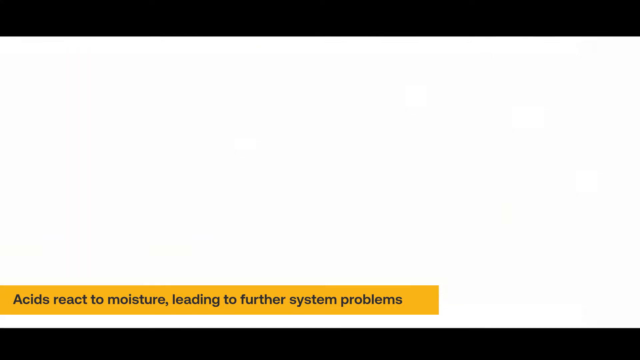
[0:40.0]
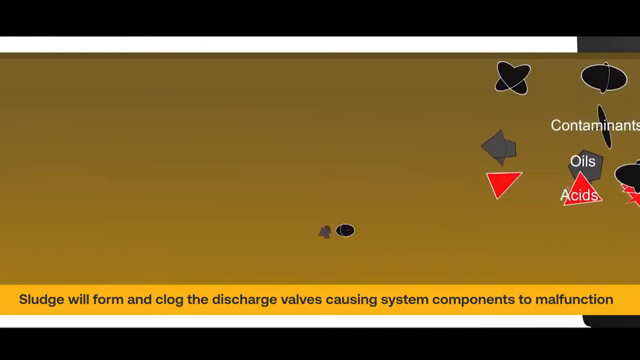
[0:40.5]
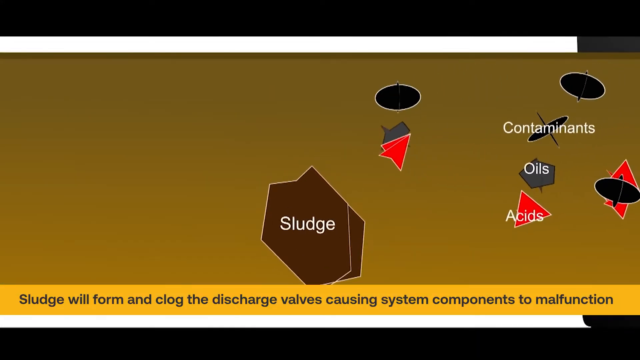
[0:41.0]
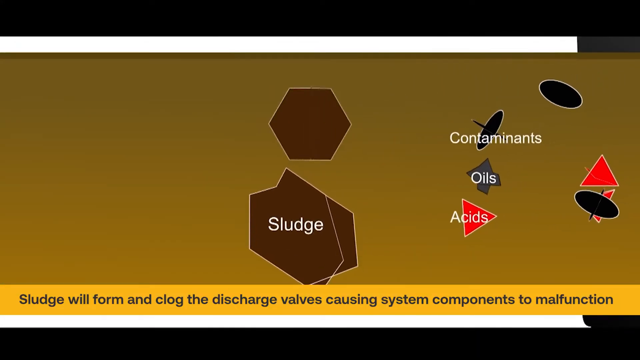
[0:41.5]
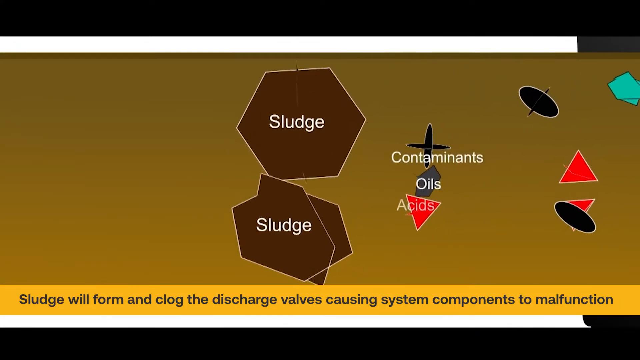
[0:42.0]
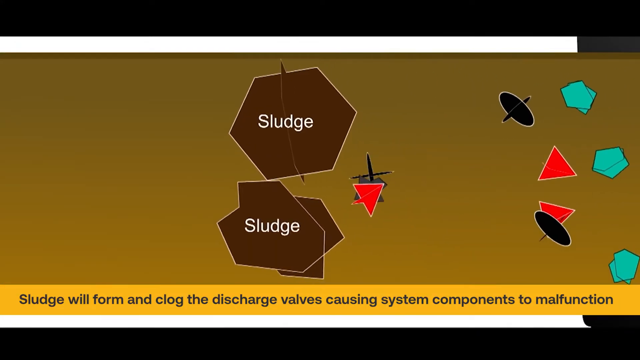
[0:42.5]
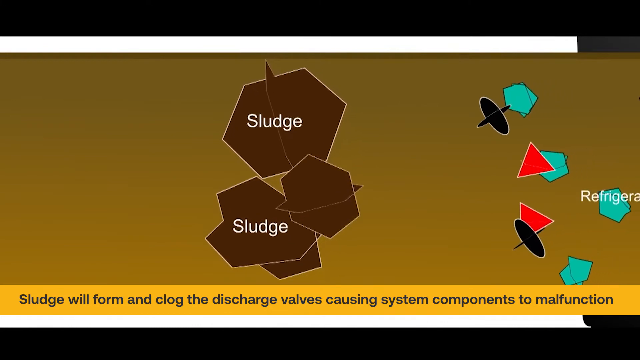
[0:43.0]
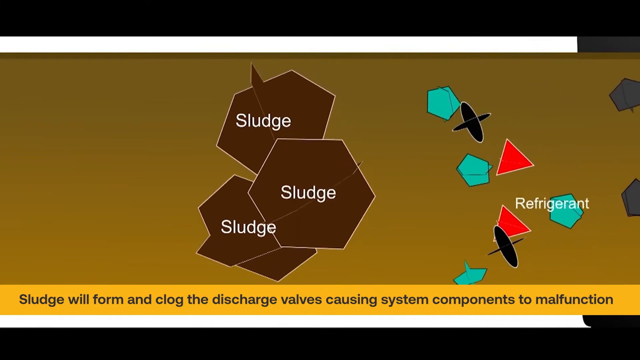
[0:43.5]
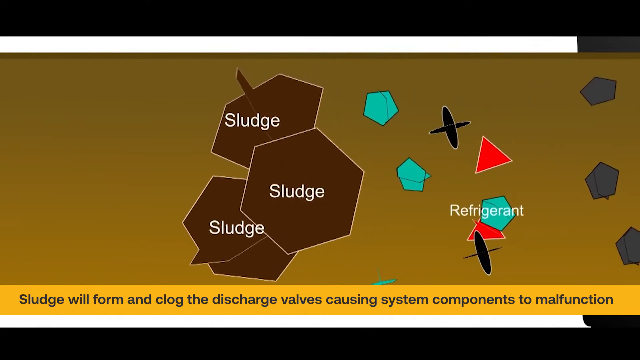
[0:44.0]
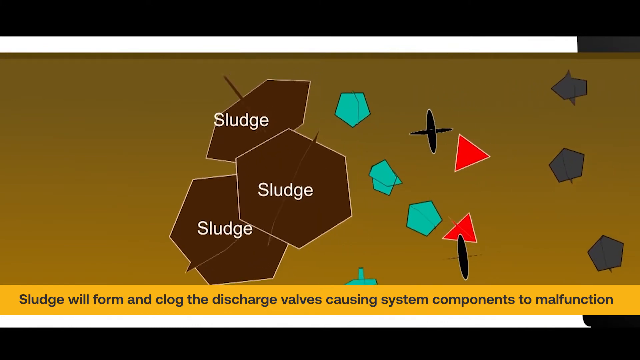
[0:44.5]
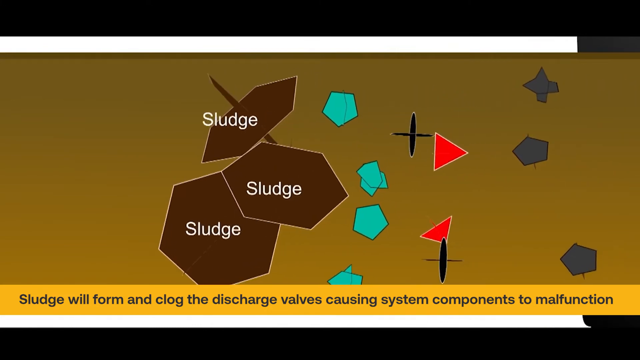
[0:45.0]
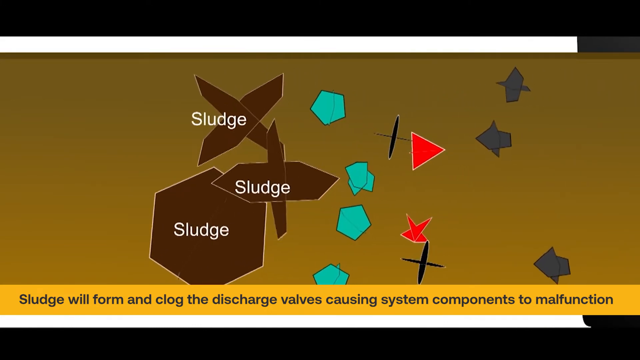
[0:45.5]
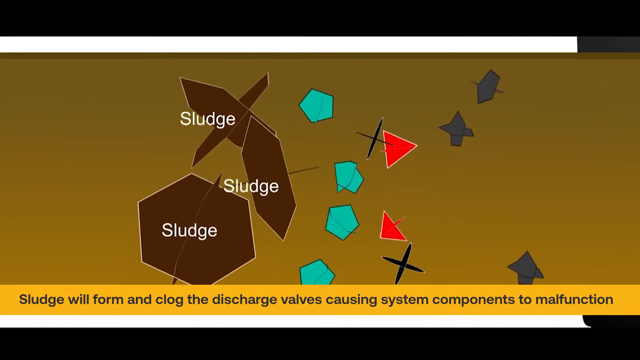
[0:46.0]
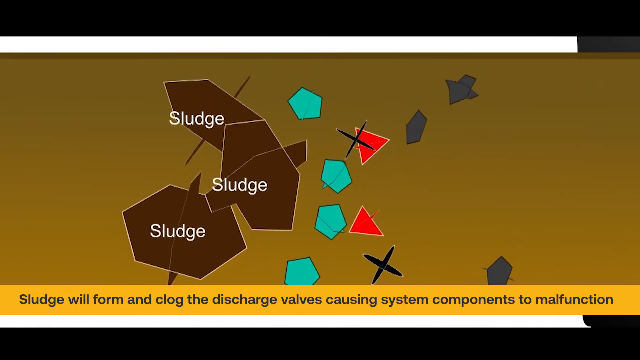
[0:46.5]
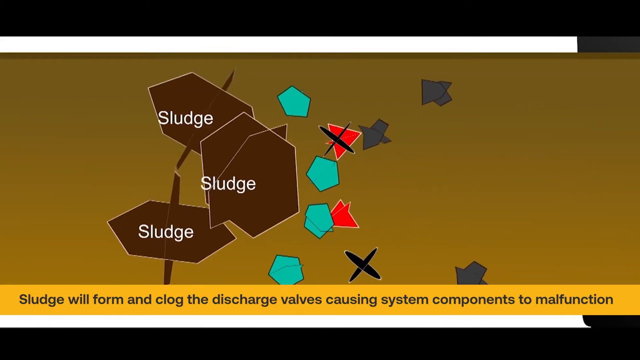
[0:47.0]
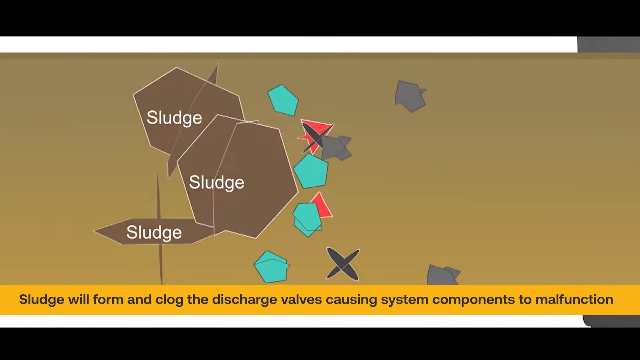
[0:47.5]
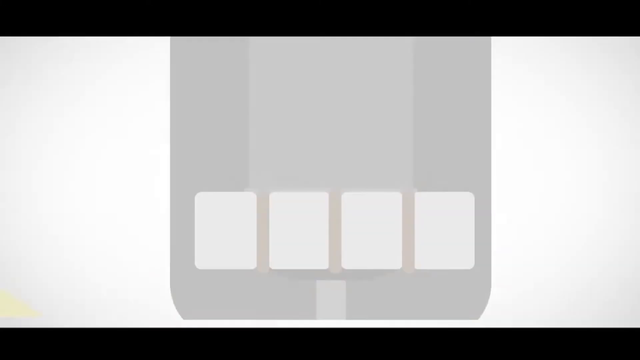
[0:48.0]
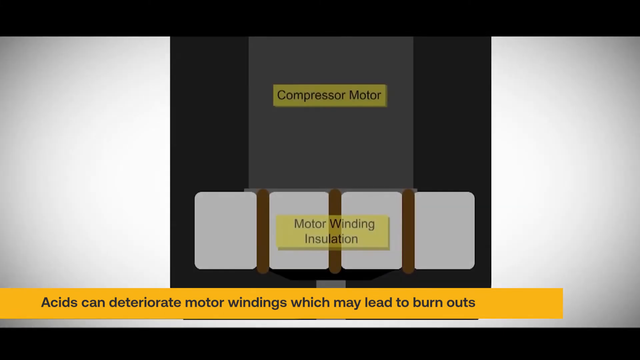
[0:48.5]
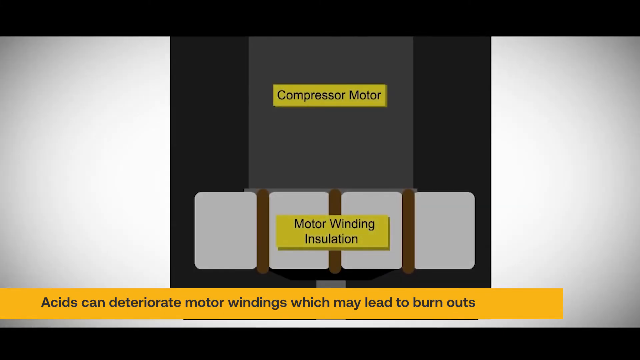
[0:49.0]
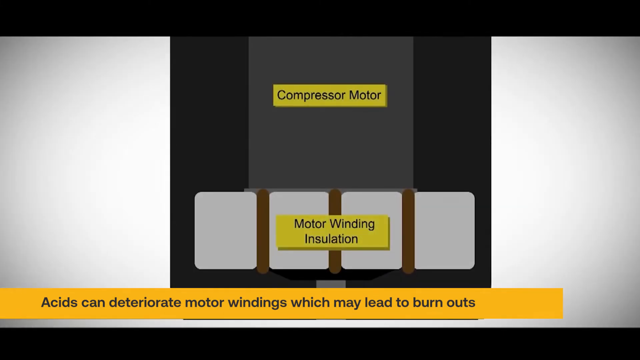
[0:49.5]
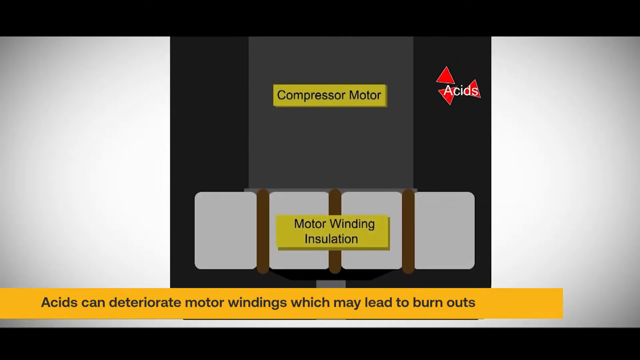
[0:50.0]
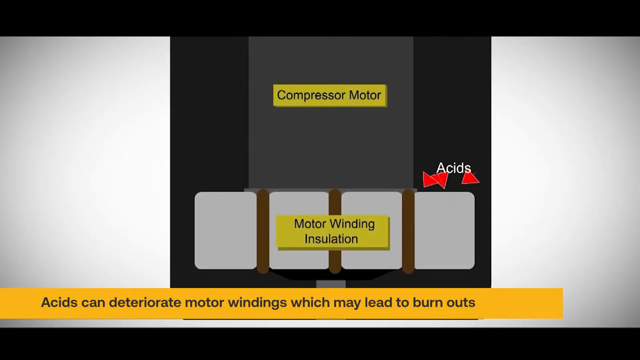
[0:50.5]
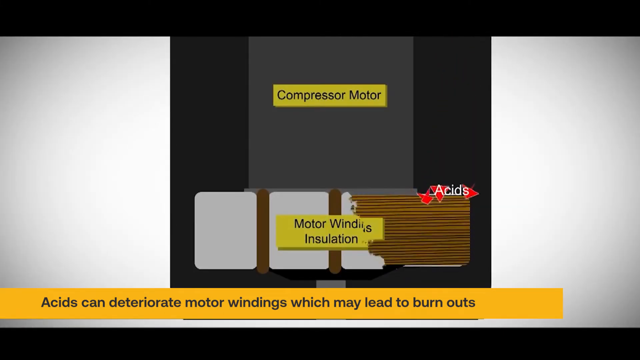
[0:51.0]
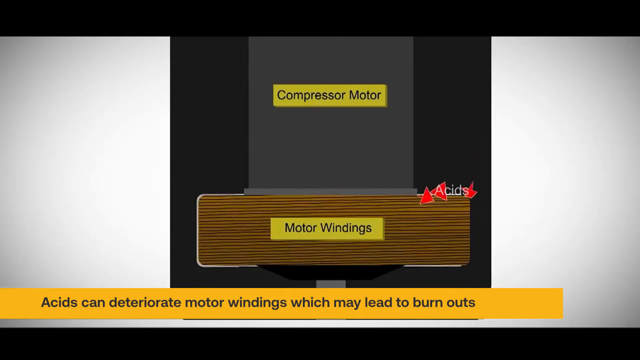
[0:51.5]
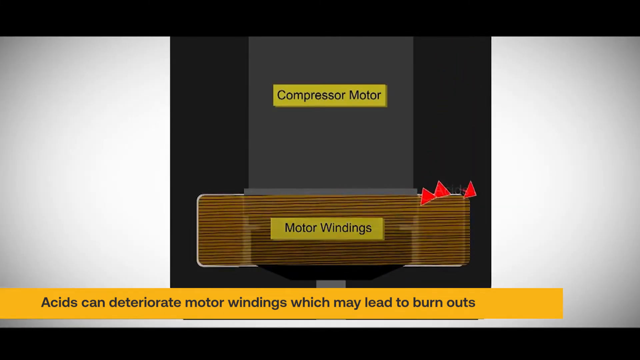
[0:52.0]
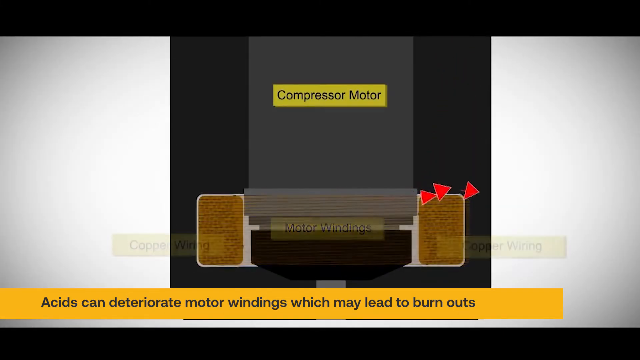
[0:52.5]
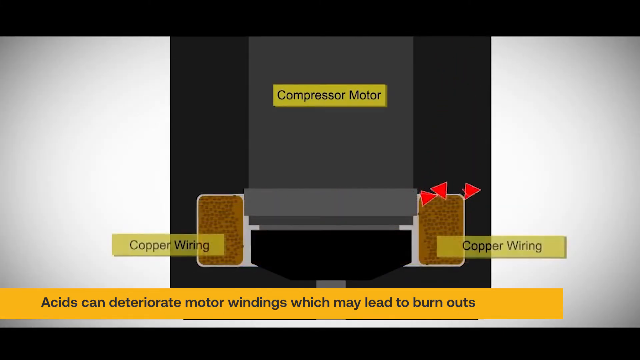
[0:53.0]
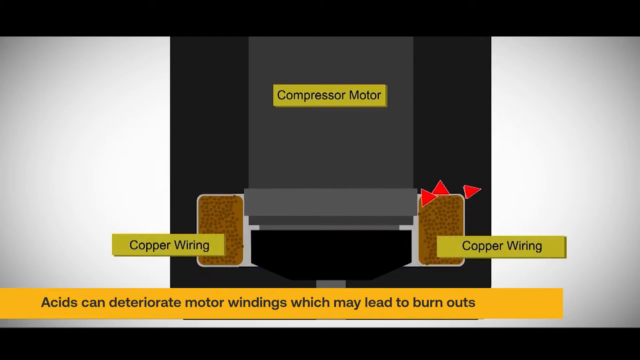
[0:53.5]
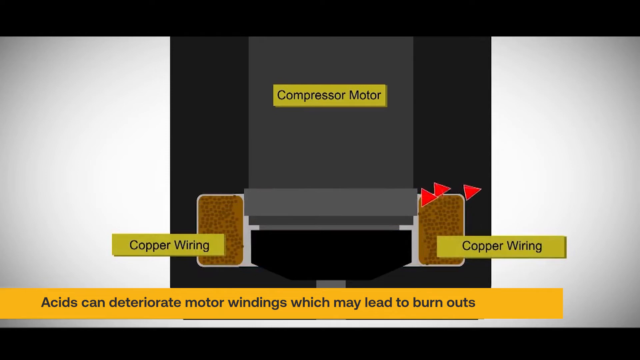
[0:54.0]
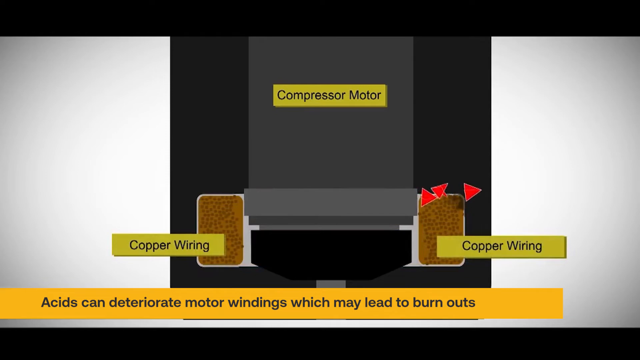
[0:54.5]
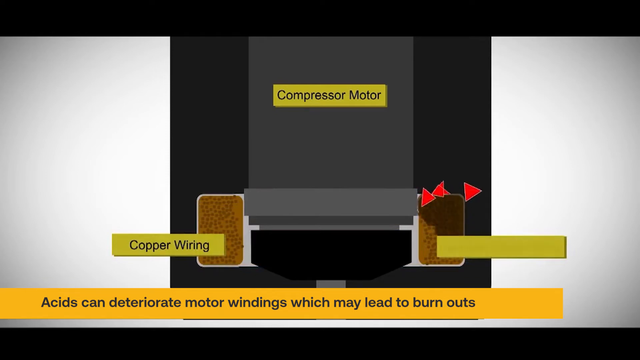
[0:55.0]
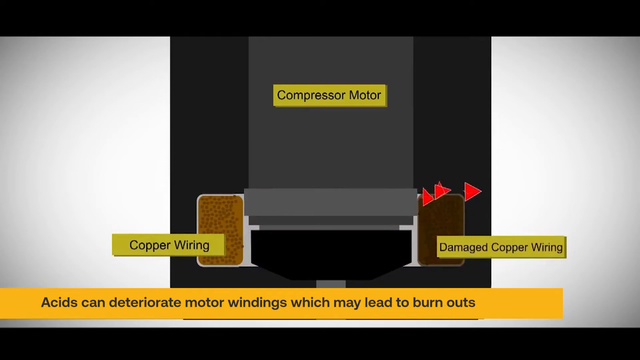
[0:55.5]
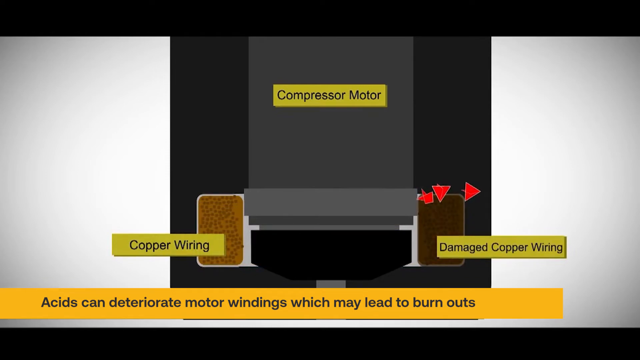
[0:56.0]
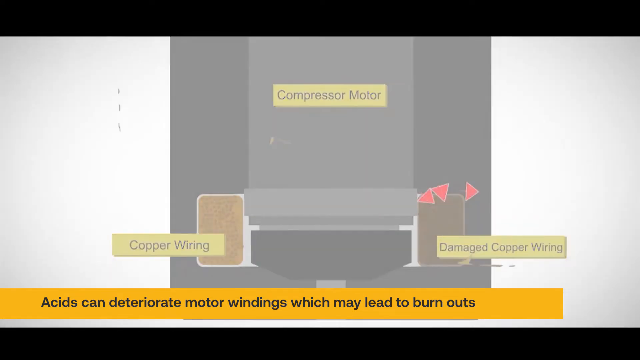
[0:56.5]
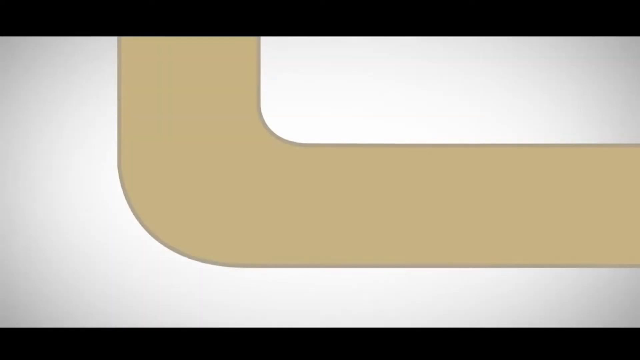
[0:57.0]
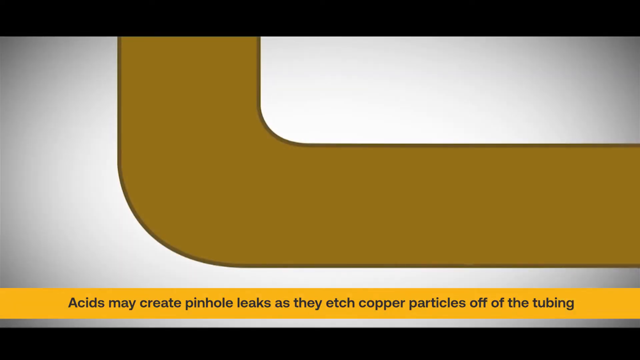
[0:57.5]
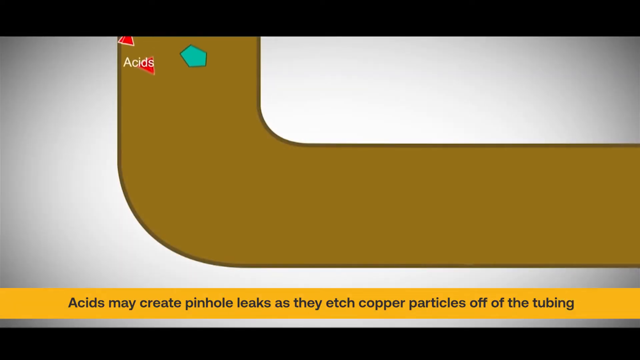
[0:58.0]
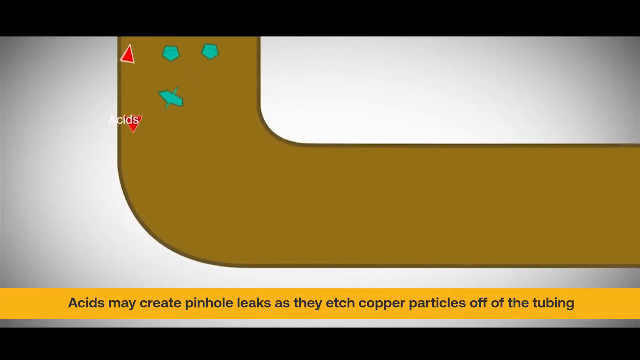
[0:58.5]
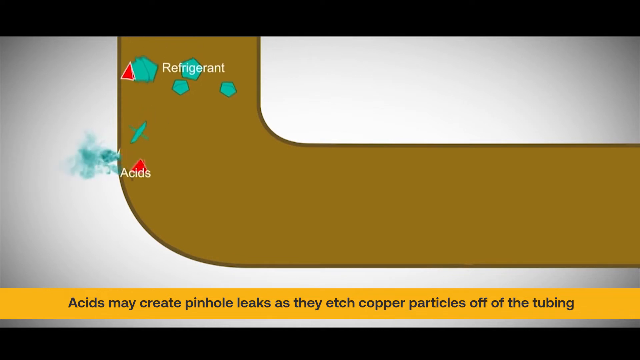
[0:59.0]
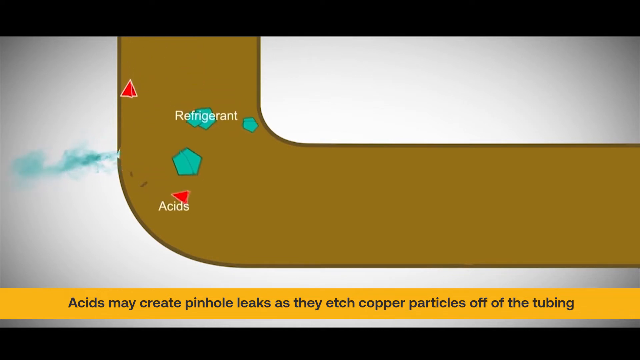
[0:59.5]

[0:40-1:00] The infographic continues, showing sludge as a brown substance, contaminants as a black substance, oils as a gray substance, and red triangles as acid. The contaminants, oils and acids clump up with the sludge, which, according to the infographic, will clog the discharge valves and cause system components to malfunction, shown as a molecular buildup of sludge in the system. It then cuts to a diagram of a compressor, a compressor motor and its motor windings, showing the acids touching the motor windings and apparently causing damage. Text at the bottom reads "acids deteriorate motor windings which may lead to burnouts".